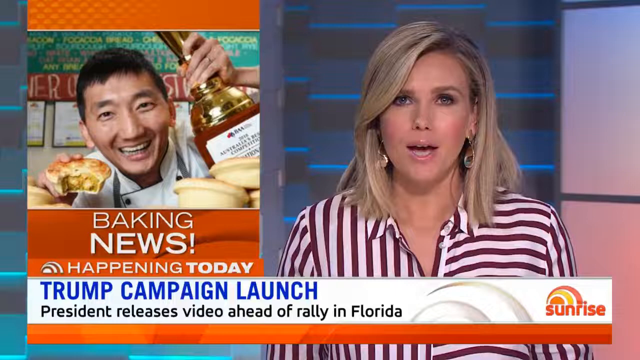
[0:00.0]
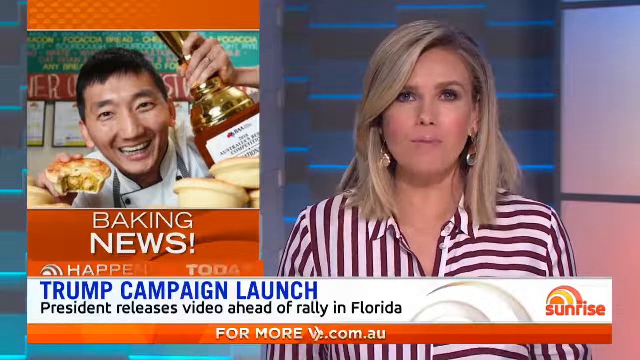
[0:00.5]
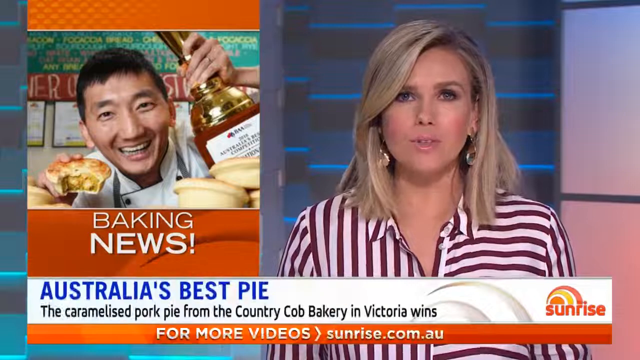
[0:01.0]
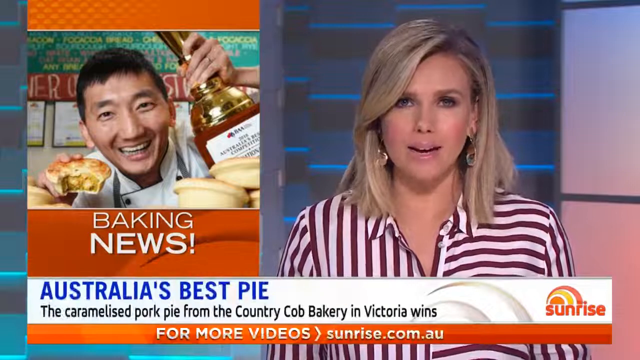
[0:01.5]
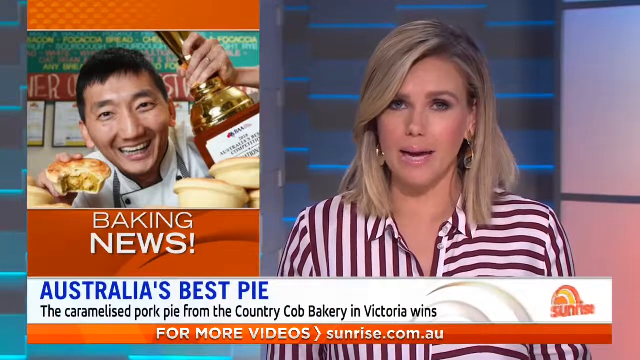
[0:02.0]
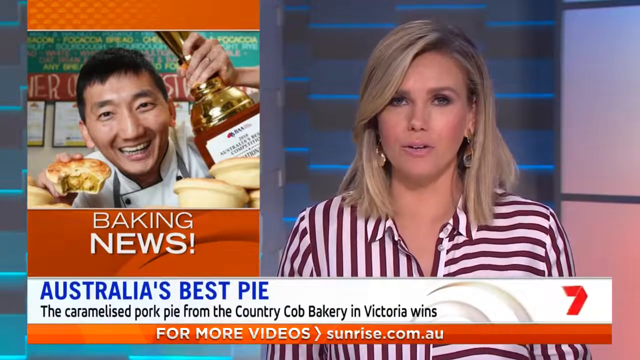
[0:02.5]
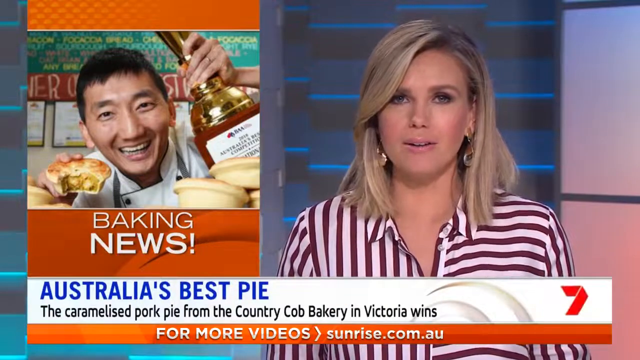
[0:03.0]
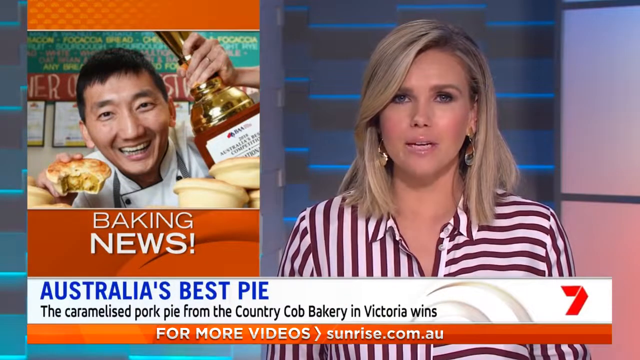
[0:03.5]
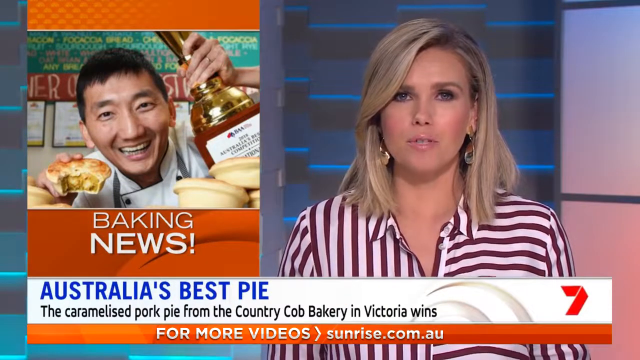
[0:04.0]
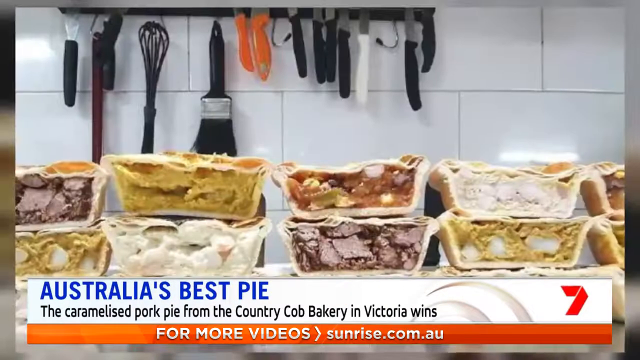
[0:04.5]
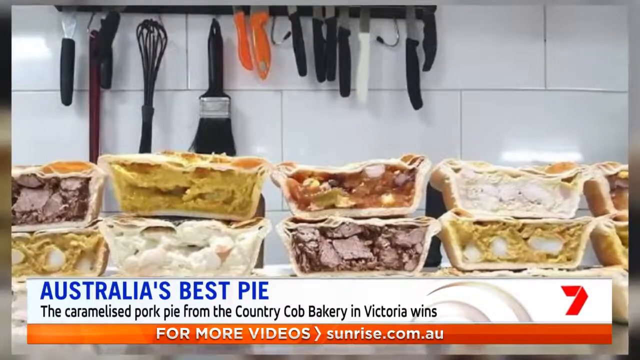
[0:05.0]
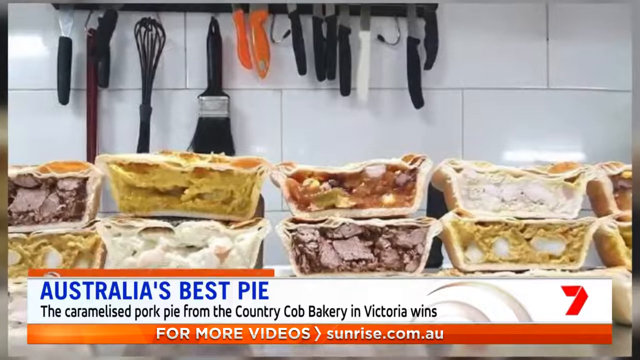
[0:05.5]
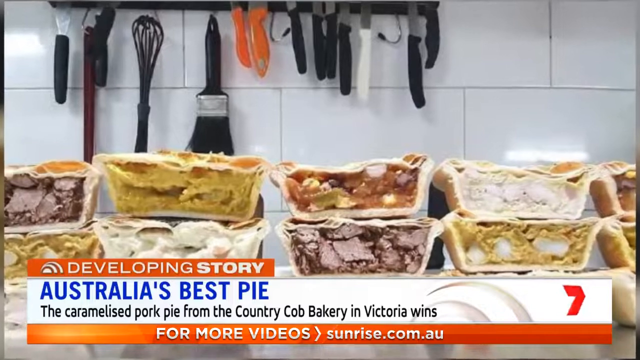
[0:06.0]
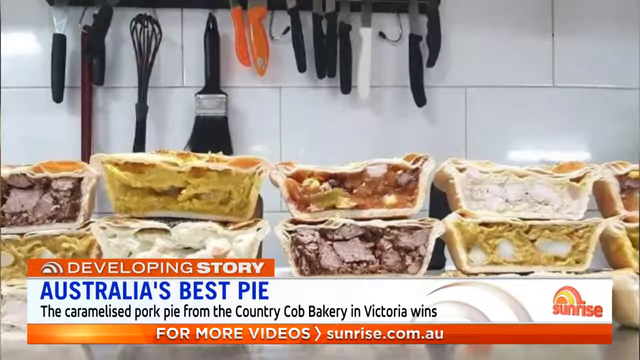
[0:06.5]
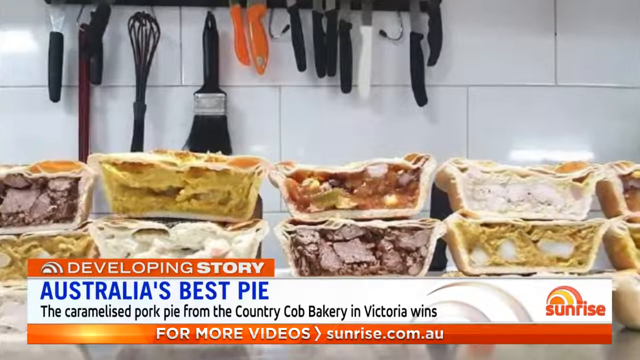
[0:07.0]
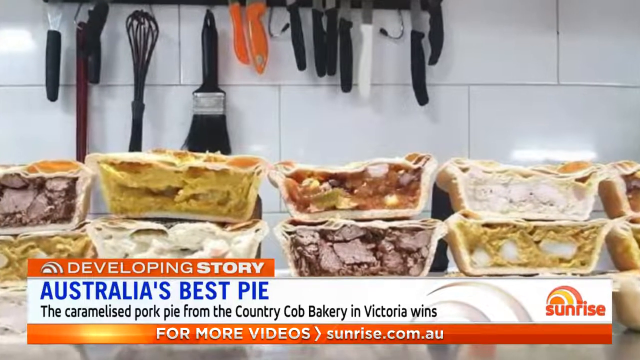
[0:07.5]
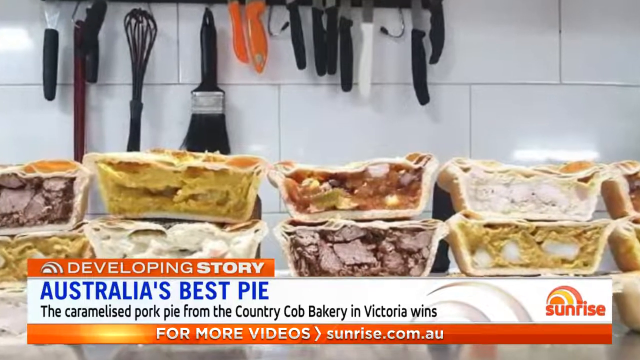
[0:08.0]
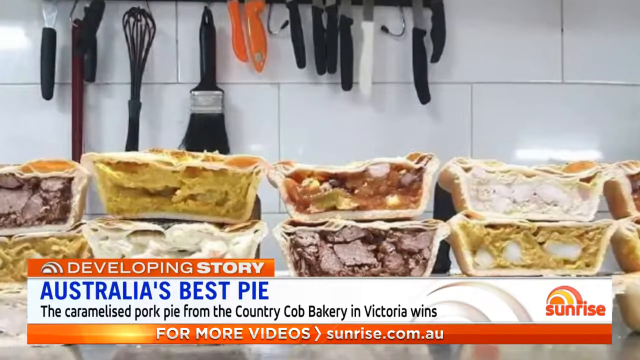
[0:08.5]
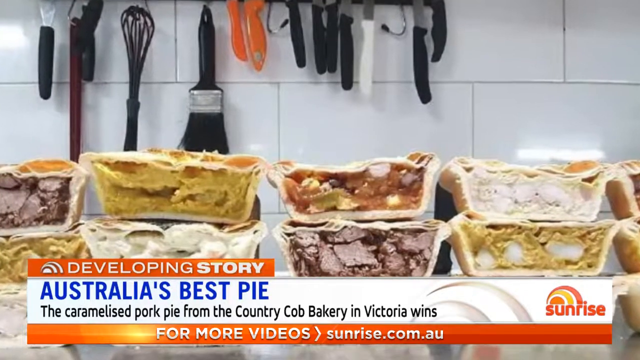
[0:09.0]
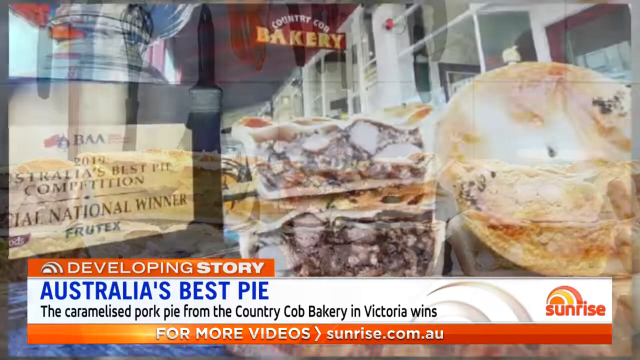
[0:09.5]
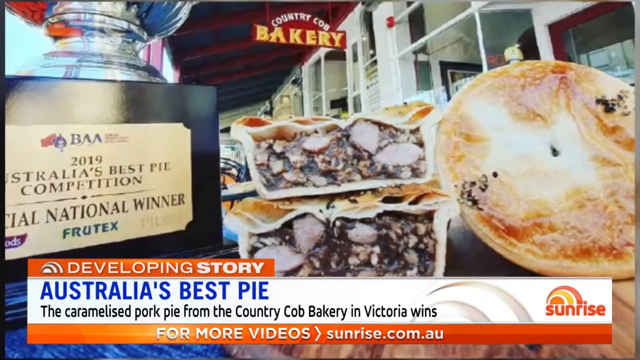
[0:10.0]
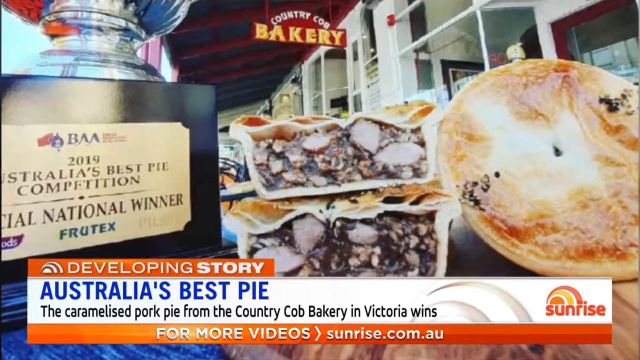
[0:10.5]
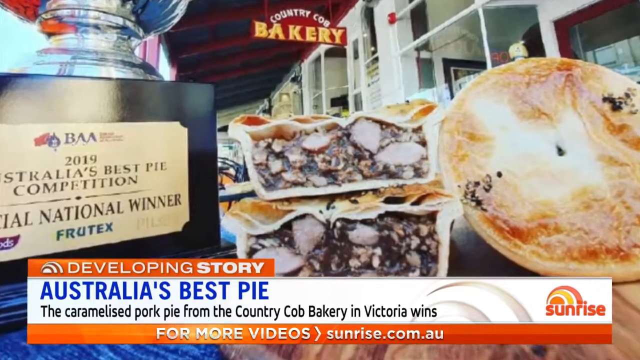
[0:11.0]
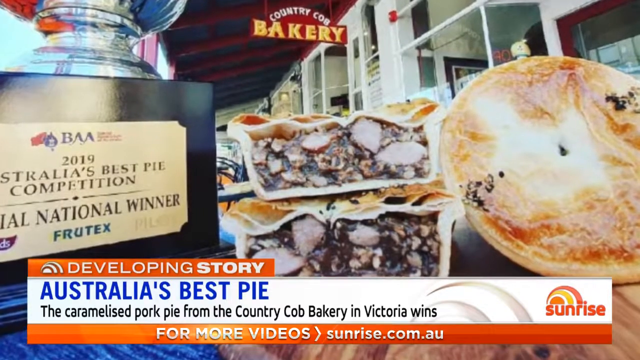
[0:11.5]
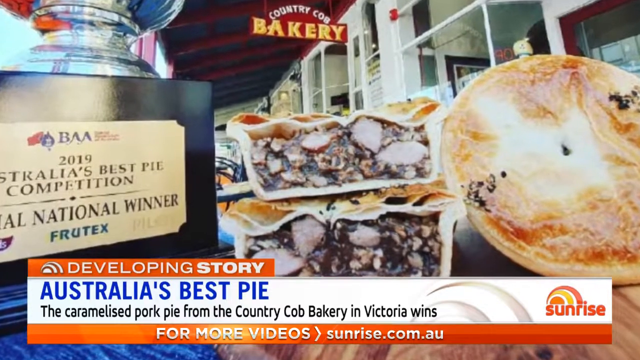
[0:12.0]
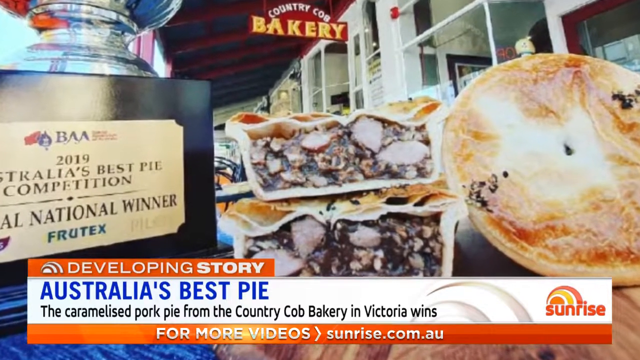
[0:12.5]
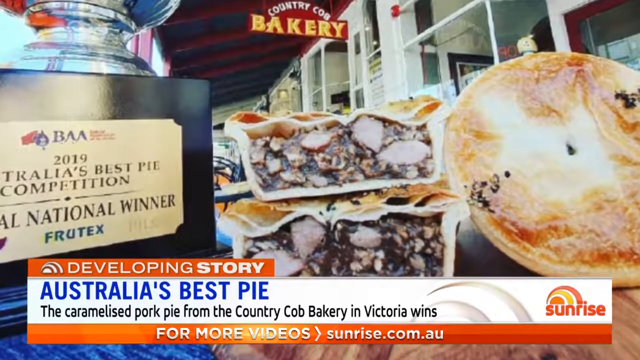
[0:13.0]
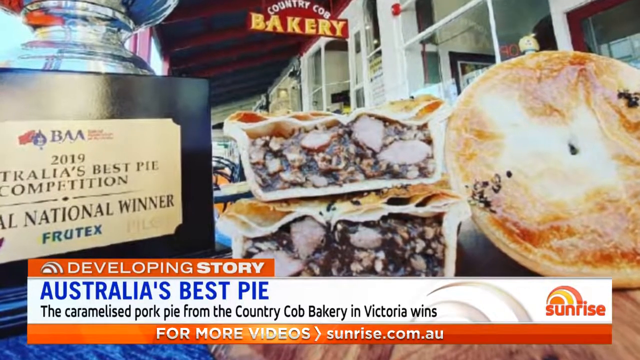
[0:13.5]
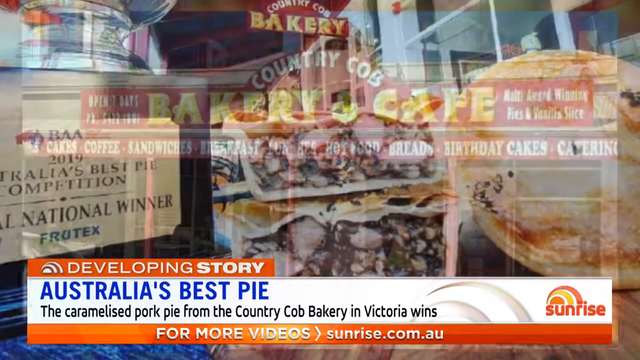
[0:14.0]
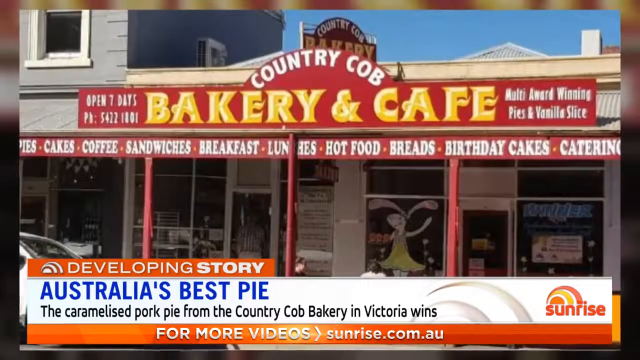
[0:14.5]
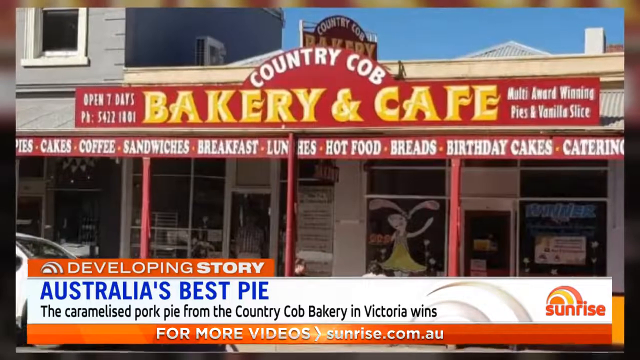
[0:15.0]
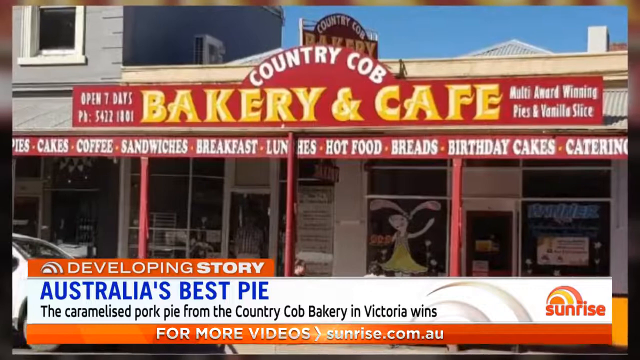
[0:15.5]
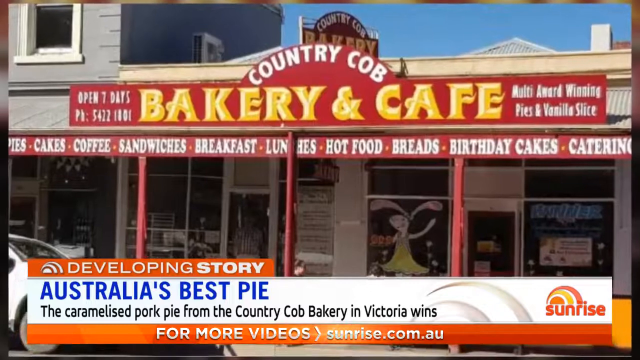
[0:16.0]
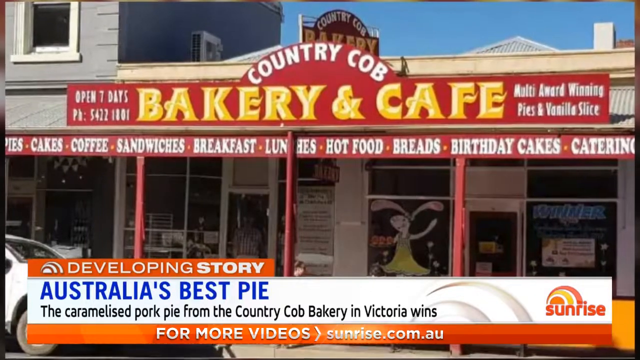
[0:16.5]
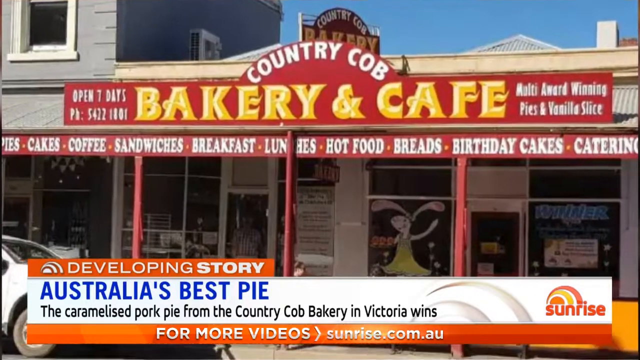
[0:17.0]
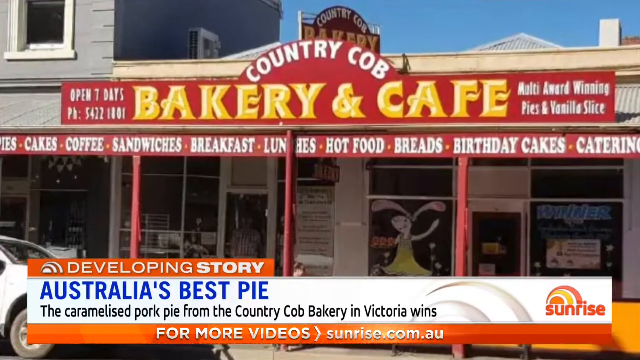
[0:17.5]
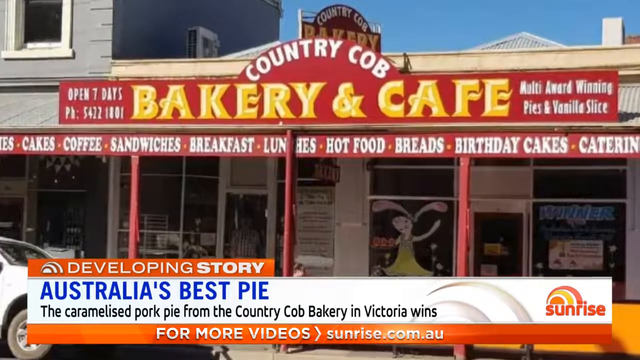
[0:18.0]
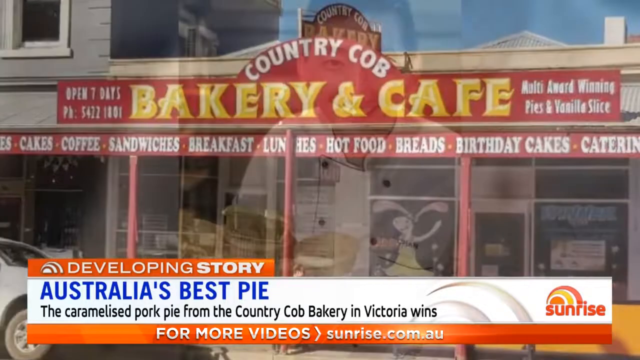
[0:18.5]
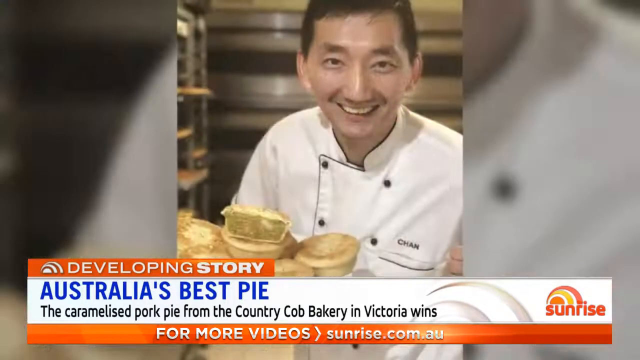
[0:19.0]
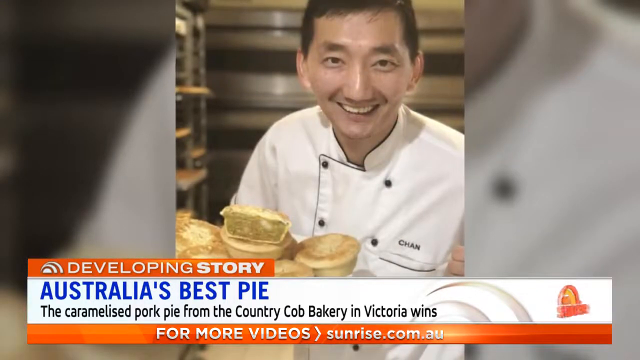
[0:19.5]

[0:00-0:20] A Sunrise news broadcast features a woman with blonde hair, long earrings and a white and black striped shirt. Text below her on the screen shows breaking news: "trump campaign launch president releases video ahead of rally in florida". The studio has blue modern screens and what appears to be a modern design wall. Next to her on the left is a man who seems to be holding a bottle and has some muffins. Text below on the screen then reads "Australia's best pie", and the camera zooms in to the pie, which is from the Country Cobb Bakery. The man then appears at his table with the pie.